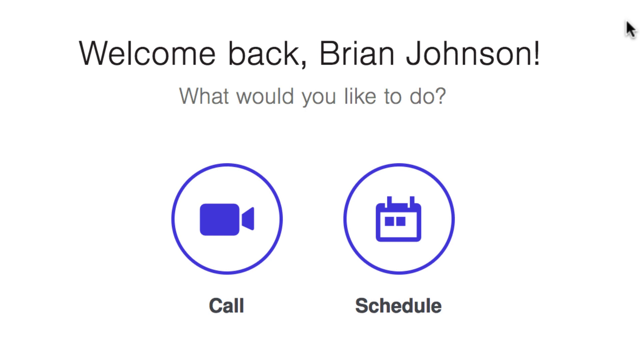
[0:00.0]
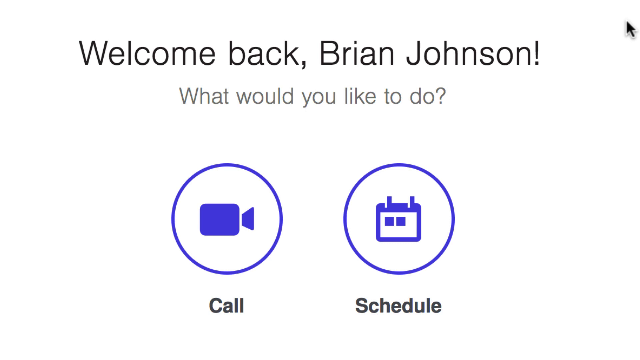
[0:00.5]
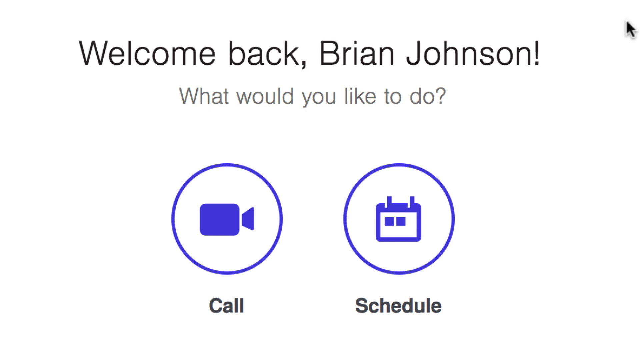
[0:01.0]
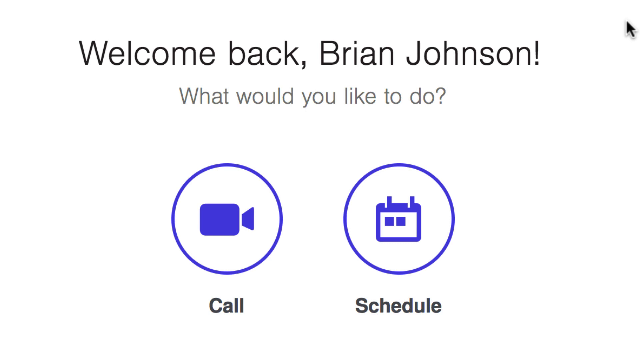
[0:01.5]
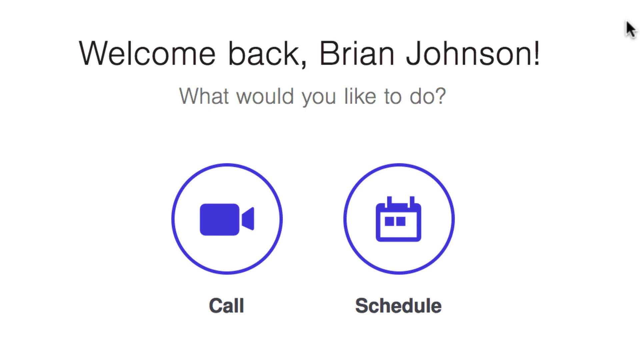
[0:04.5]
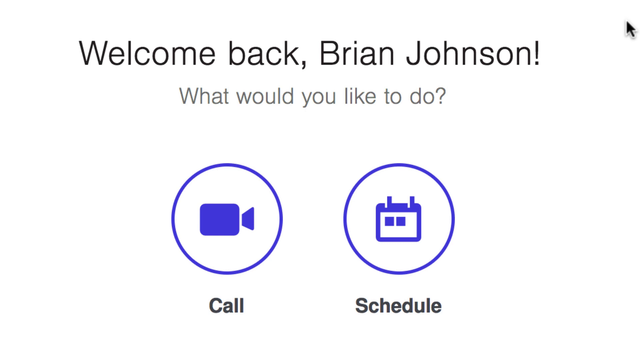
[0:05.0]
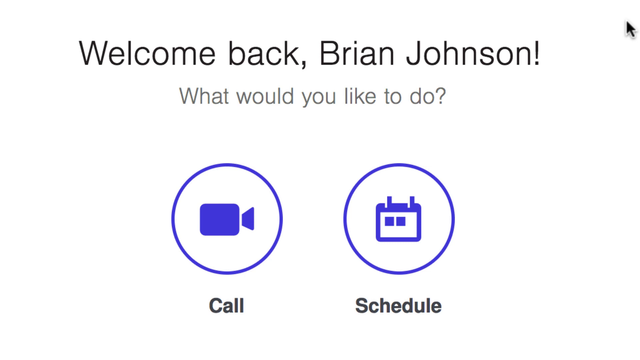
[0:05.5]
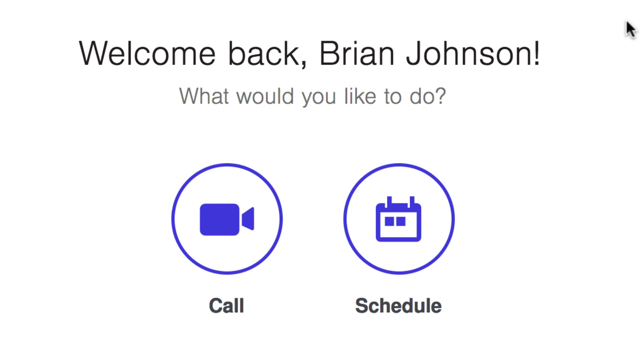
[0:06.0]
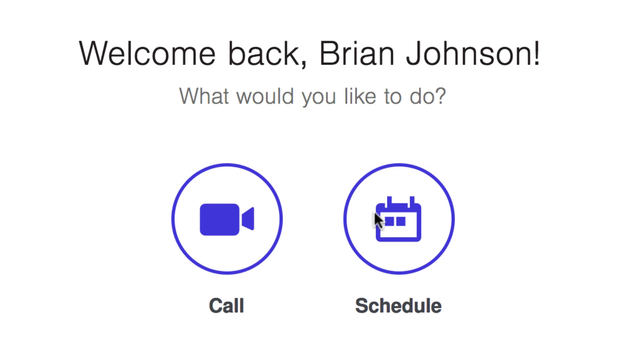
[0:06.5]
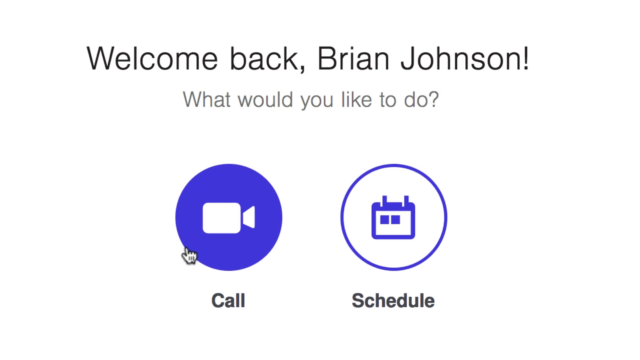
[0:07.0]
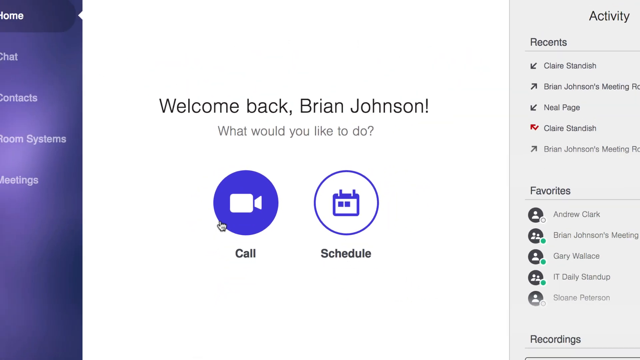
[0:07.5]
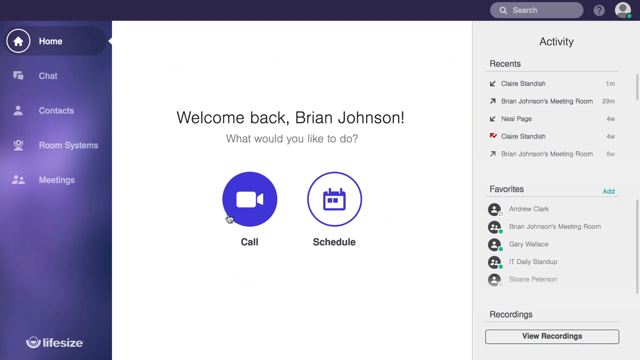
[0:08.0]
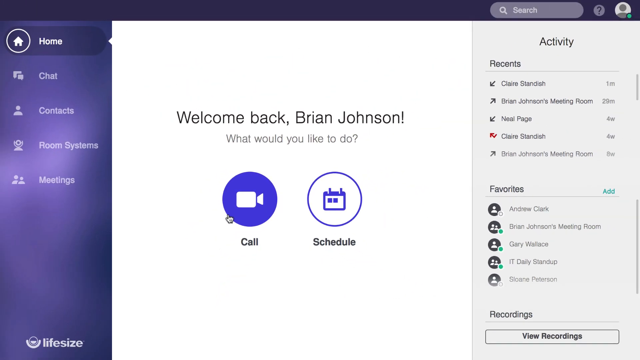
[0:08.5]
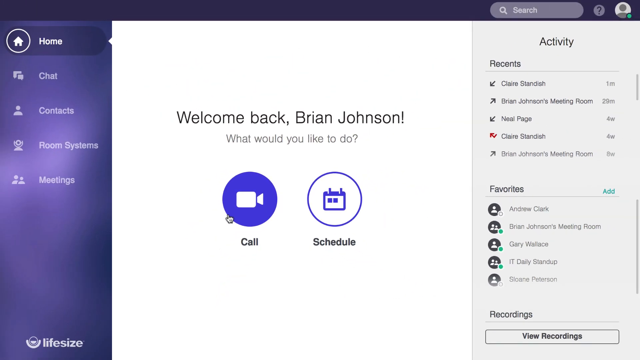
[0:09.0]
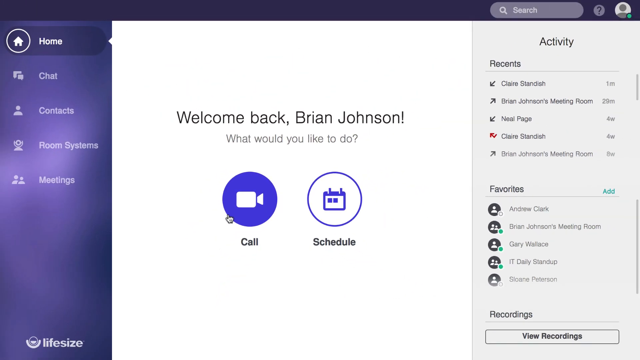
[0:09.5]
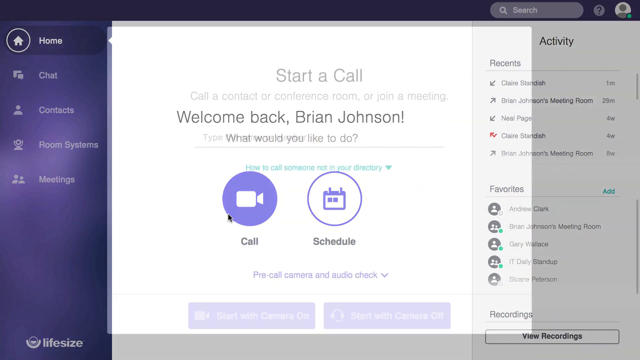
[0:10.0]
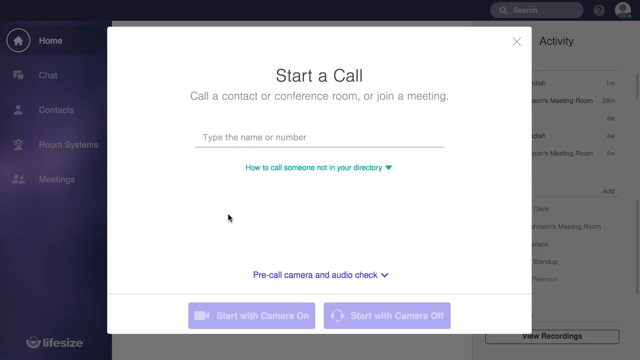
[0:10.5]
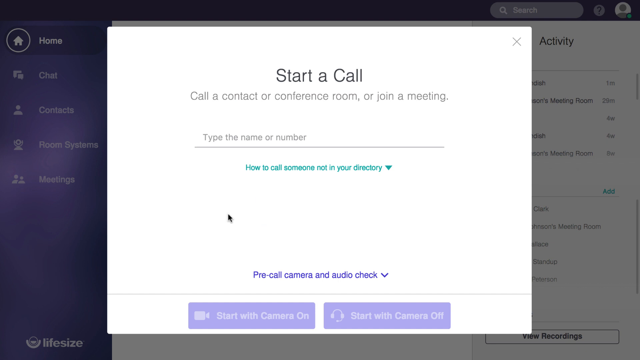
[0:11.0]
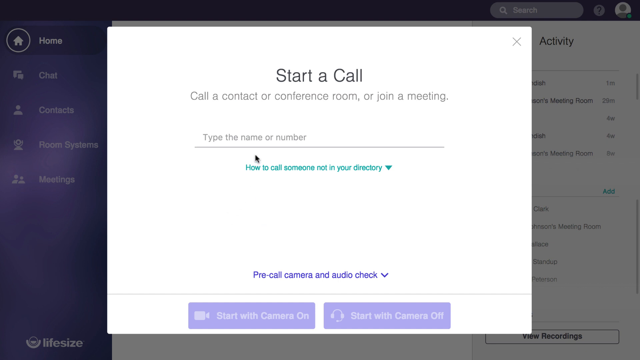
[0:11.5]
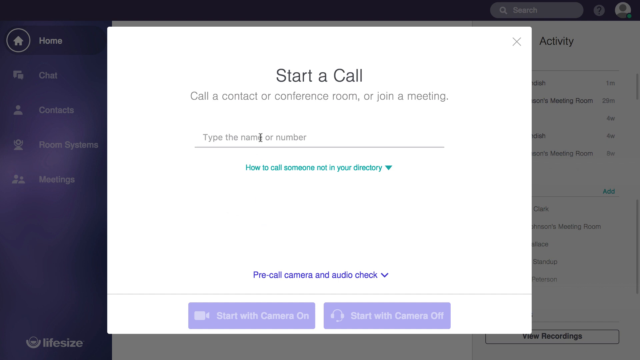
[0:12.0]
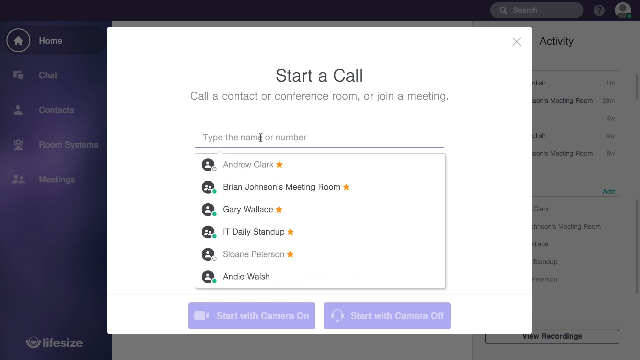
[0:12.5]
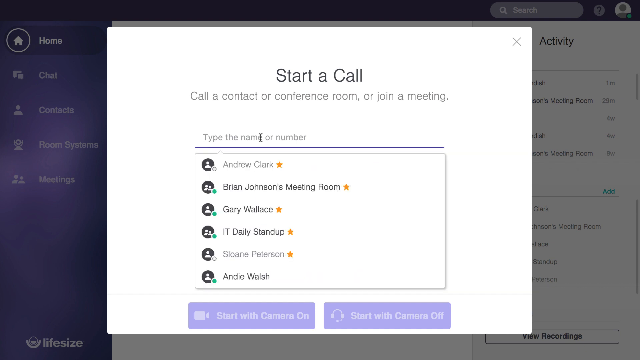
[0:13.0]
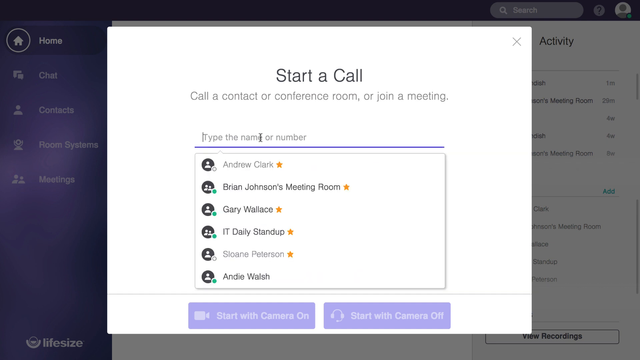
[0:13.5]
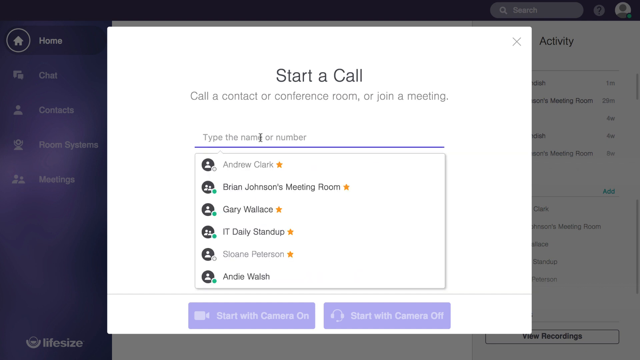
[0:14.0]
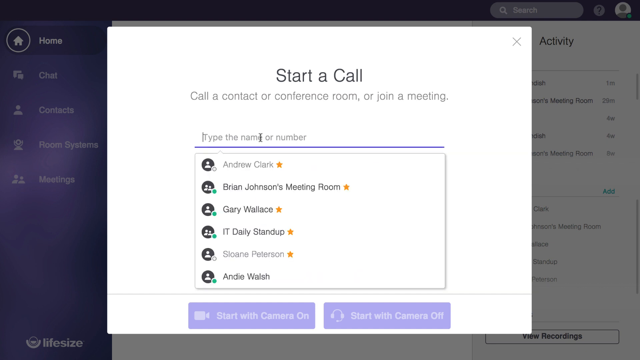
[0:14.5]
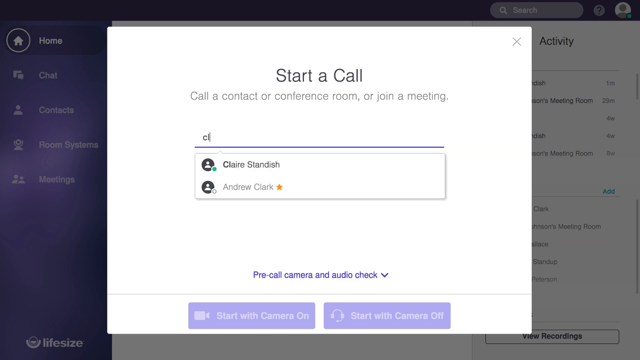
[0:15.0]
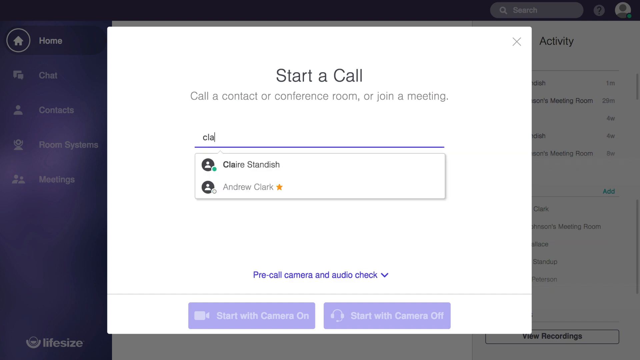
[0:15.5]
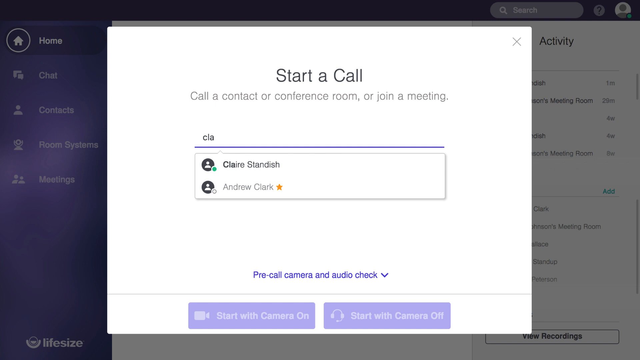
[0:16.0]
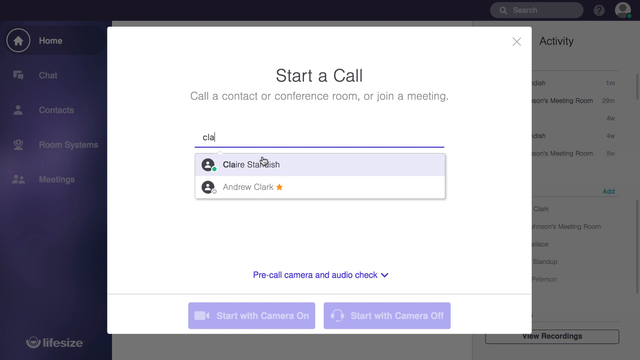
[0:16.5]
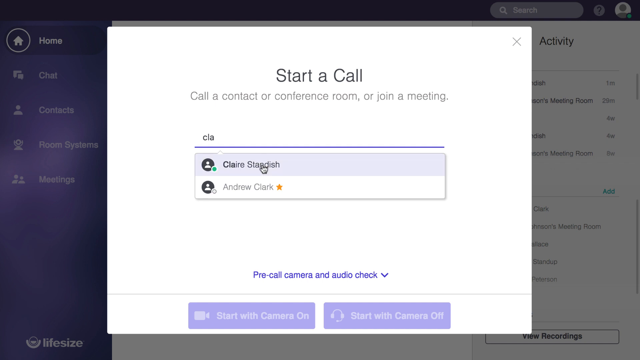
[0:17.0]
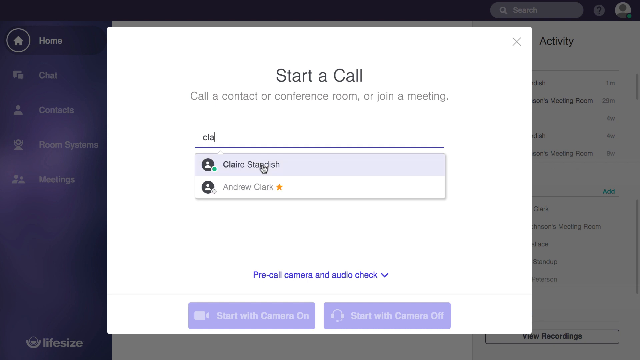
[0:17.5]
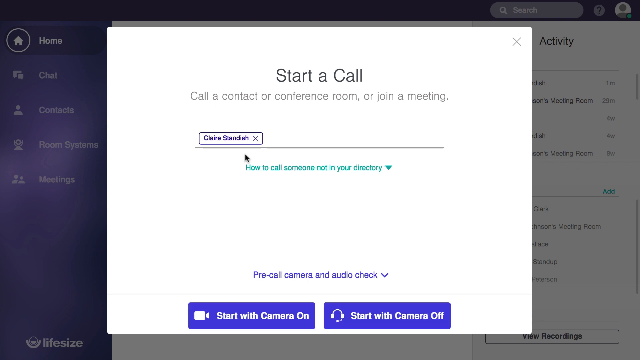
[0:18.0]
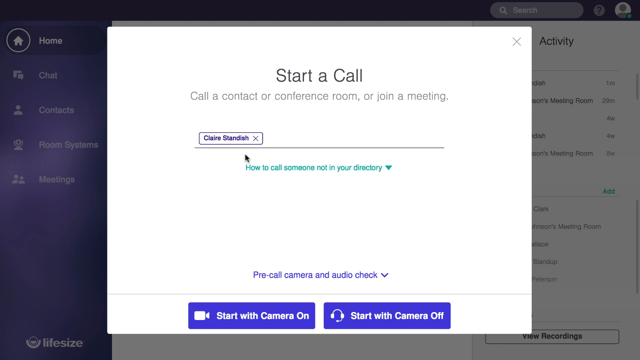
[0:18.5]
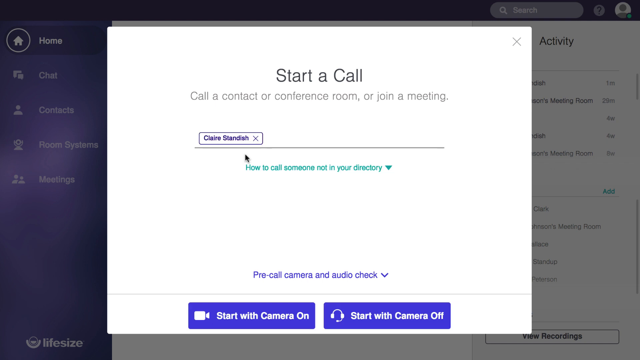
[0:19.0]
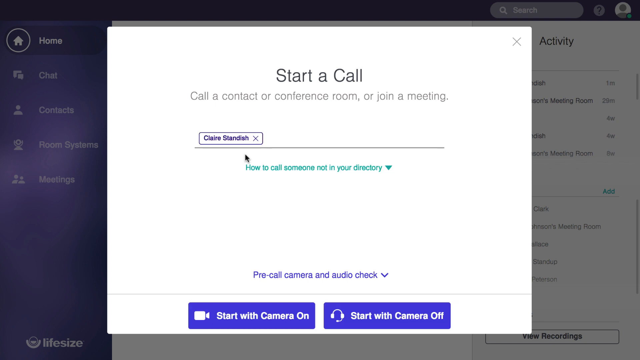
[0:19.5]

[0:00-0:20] A close-up shows what looks like an open website for calling someone or scheduling appointments. At first the screen shows graphics for Call and Schedule, the Schedule one with a little calendar on it, and at the top the text reads "Welcome back, Brian Johnson! What would you like to do?" The camera pulls out slowly to reveal the entire page. A cursor clicks the Call button, and the screen switches to one headed "Start a Call, Call a contact, or conference room, or join a meeting." The cursor clicks on the "type the name or number" line, and a drop-down menu of contacts appears. The name Claire Standish is typed in, or starts to be typed in, and appears in the drop-down menu below. It is highlighted, and the name appears on the line in a text box.